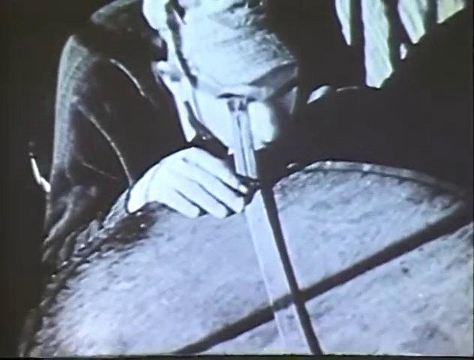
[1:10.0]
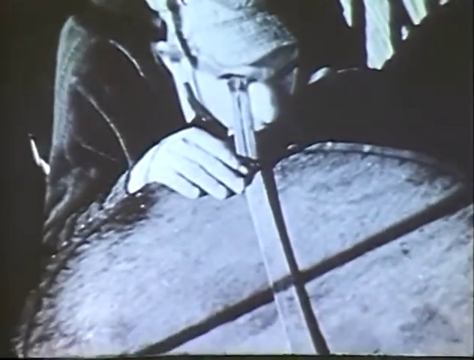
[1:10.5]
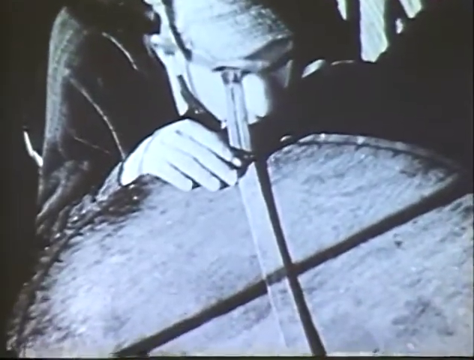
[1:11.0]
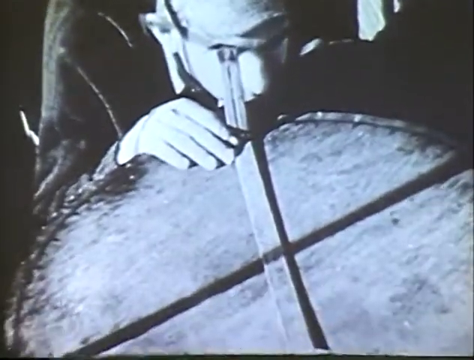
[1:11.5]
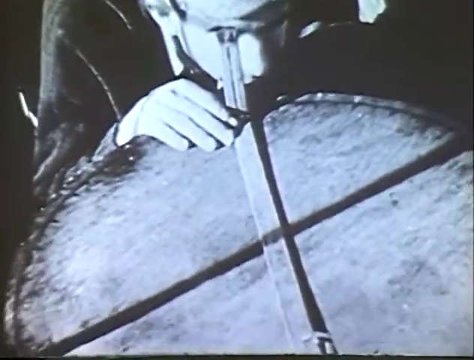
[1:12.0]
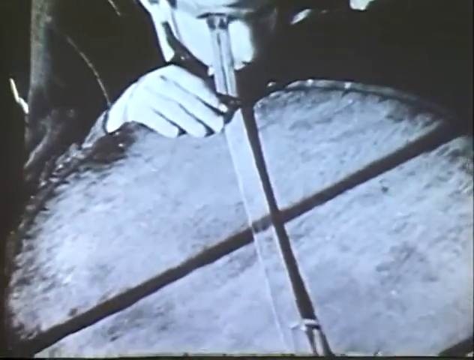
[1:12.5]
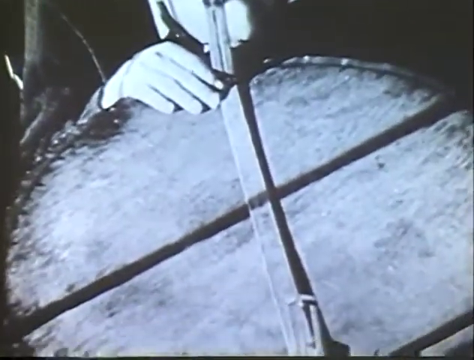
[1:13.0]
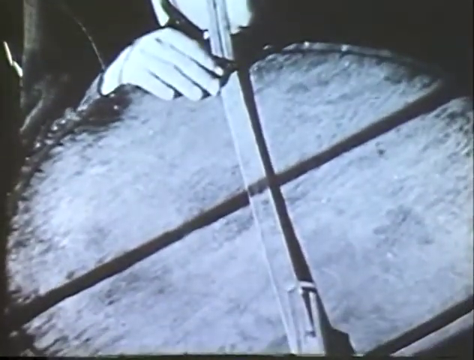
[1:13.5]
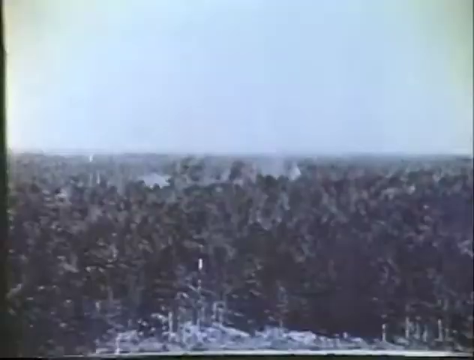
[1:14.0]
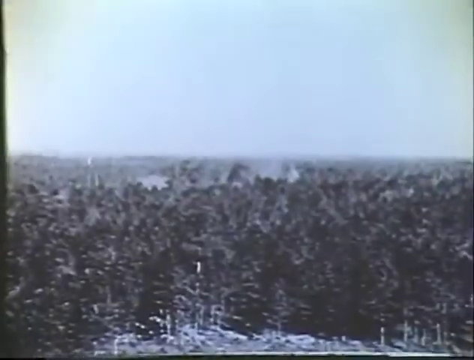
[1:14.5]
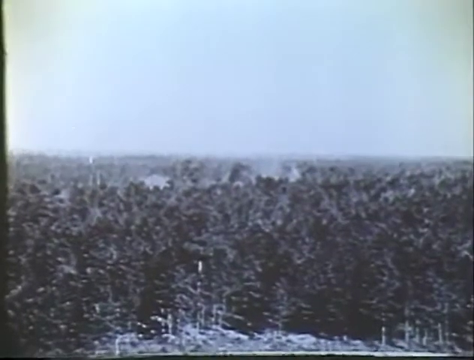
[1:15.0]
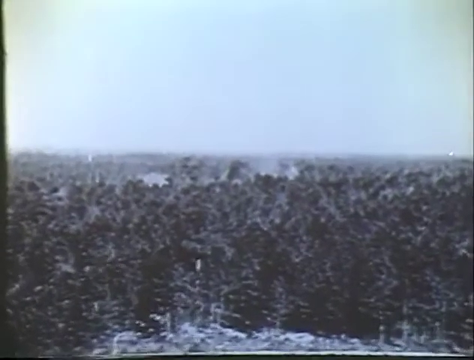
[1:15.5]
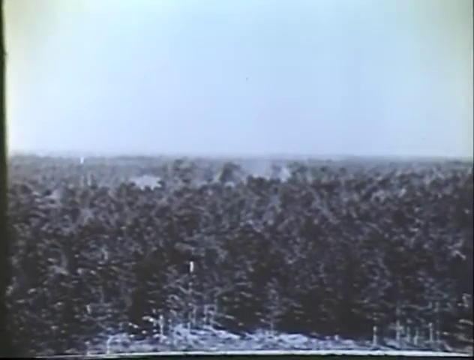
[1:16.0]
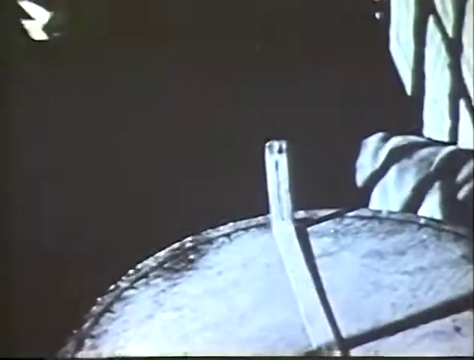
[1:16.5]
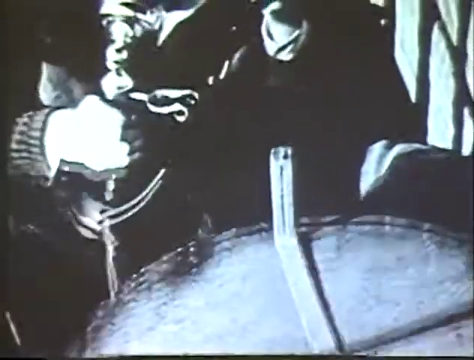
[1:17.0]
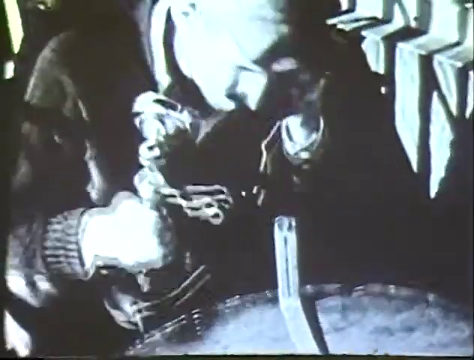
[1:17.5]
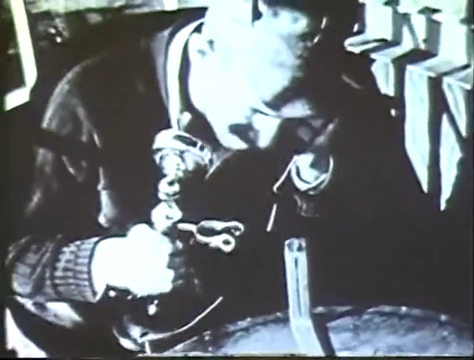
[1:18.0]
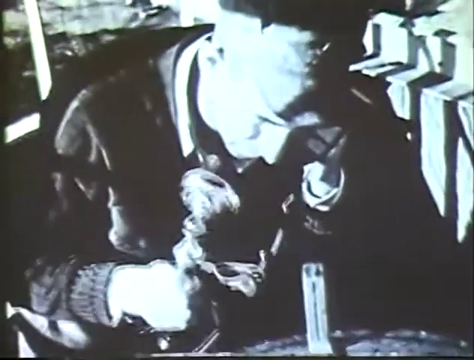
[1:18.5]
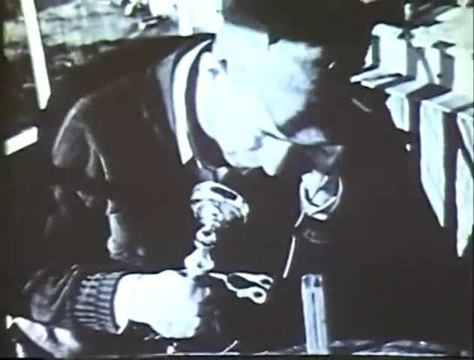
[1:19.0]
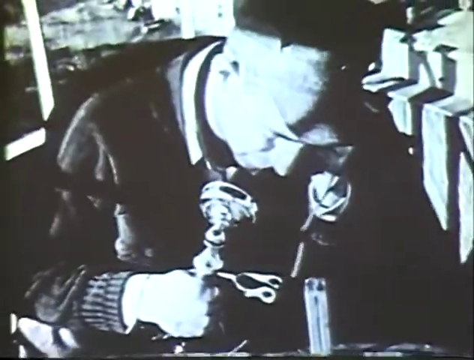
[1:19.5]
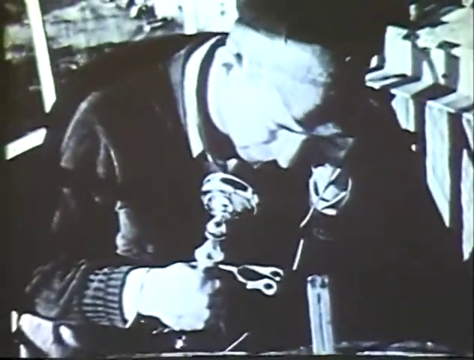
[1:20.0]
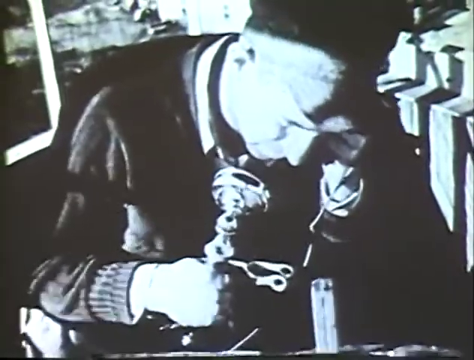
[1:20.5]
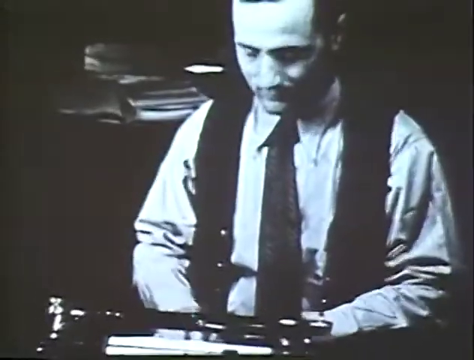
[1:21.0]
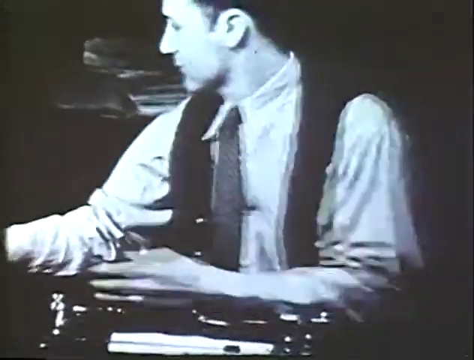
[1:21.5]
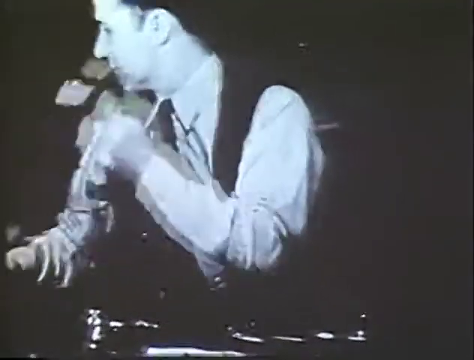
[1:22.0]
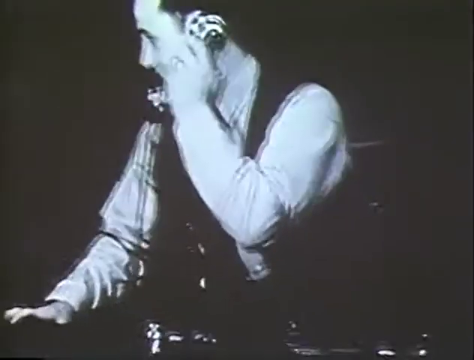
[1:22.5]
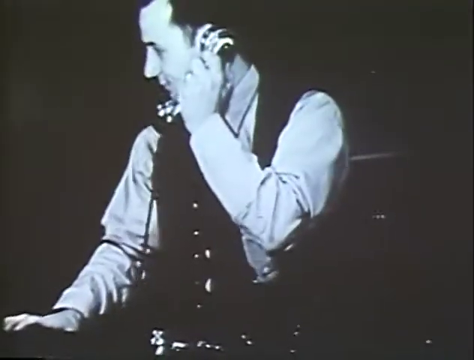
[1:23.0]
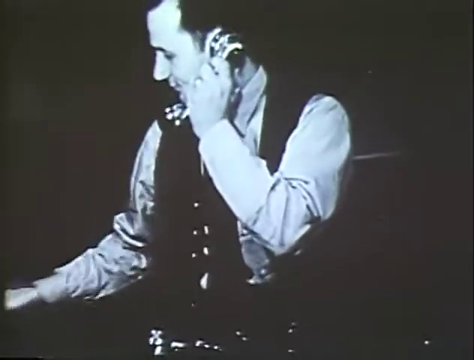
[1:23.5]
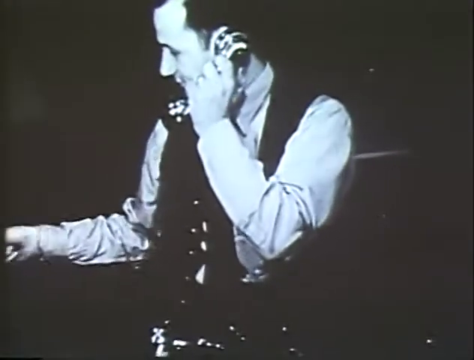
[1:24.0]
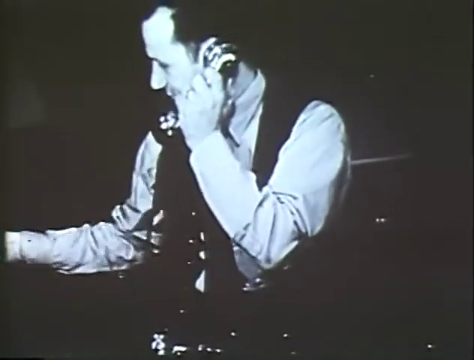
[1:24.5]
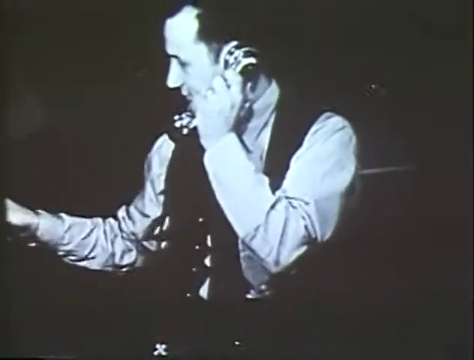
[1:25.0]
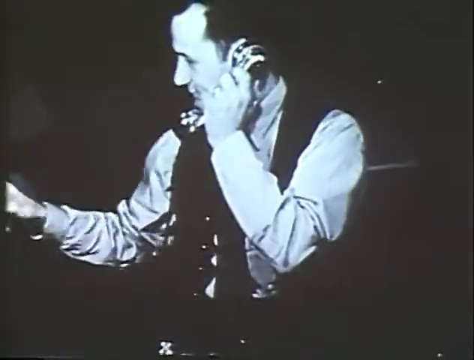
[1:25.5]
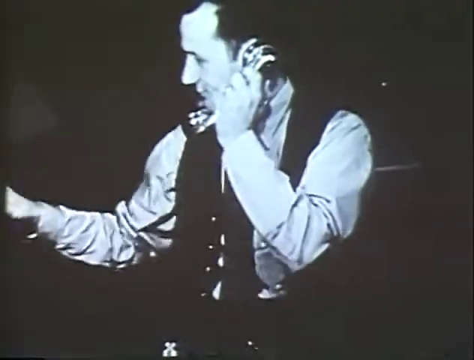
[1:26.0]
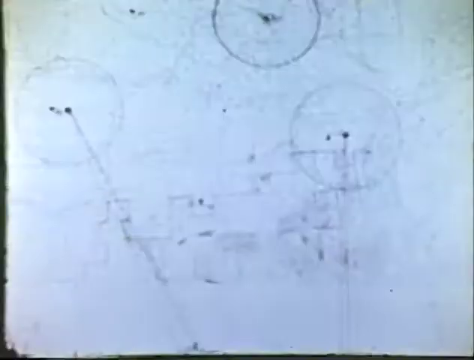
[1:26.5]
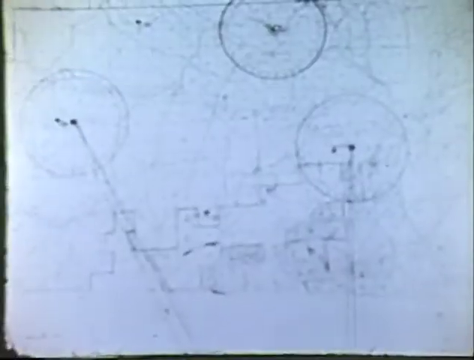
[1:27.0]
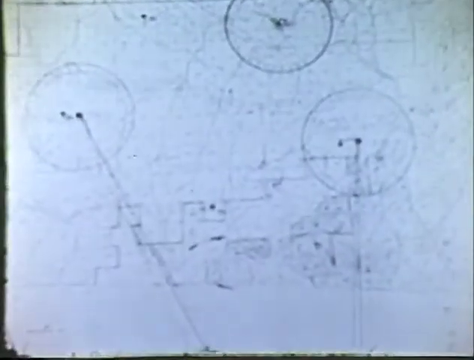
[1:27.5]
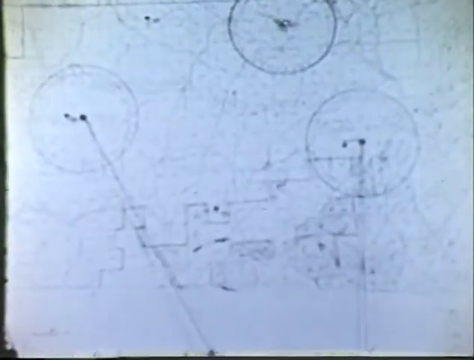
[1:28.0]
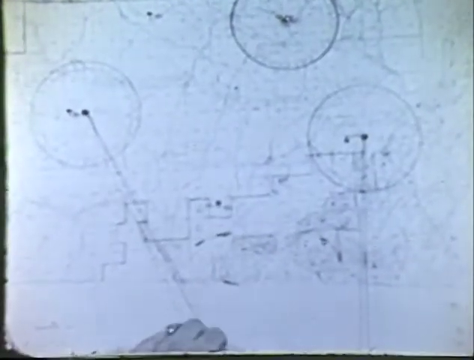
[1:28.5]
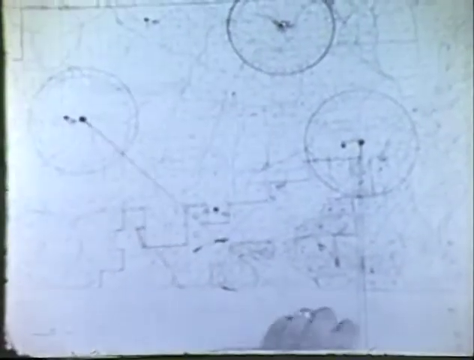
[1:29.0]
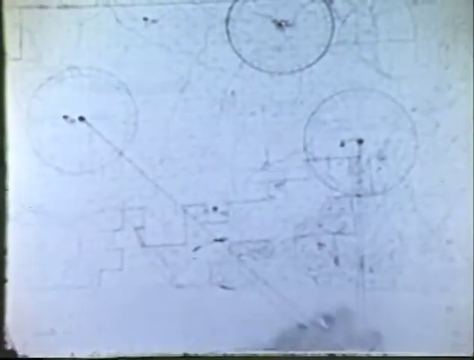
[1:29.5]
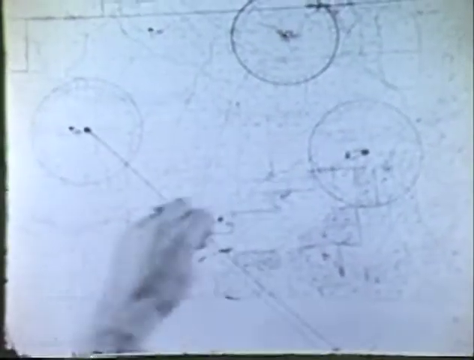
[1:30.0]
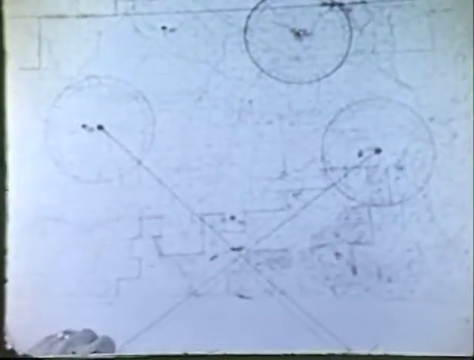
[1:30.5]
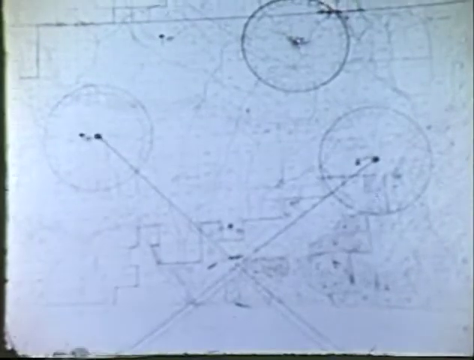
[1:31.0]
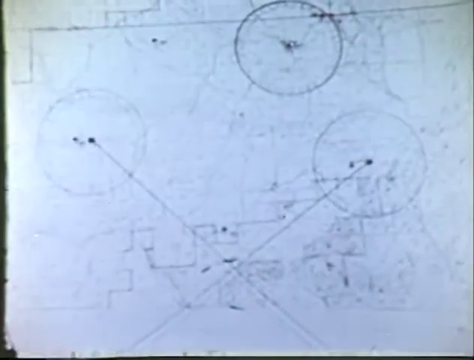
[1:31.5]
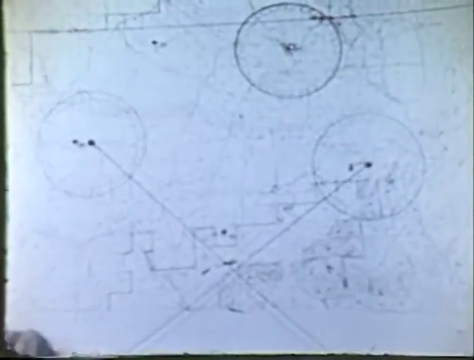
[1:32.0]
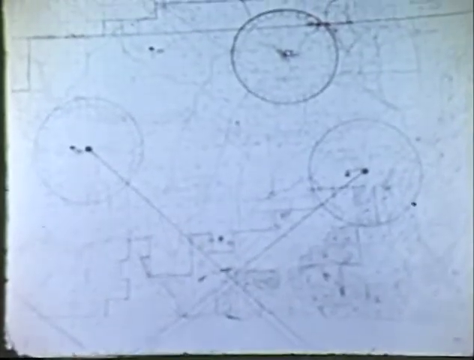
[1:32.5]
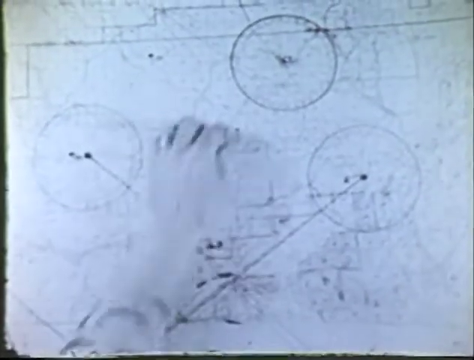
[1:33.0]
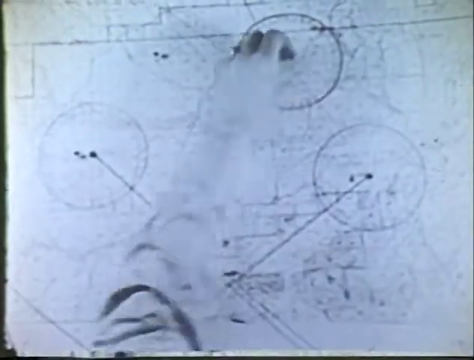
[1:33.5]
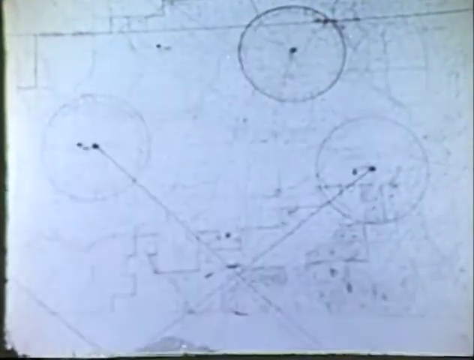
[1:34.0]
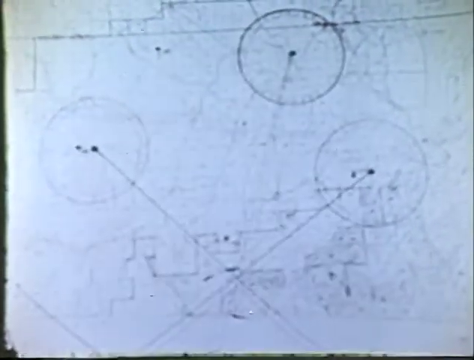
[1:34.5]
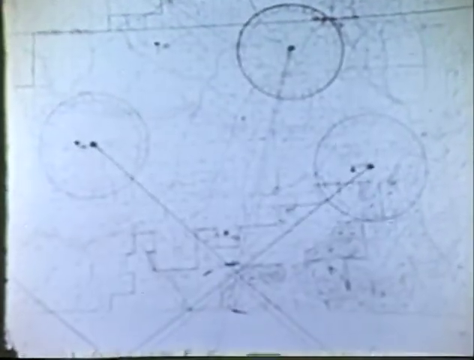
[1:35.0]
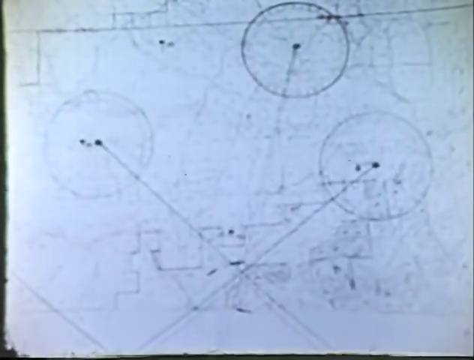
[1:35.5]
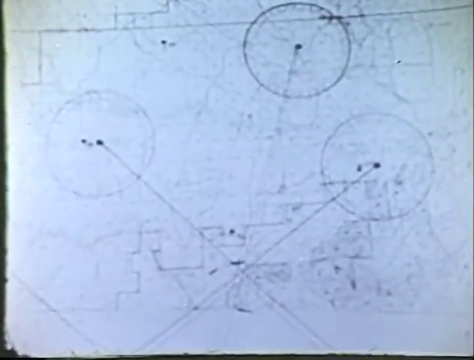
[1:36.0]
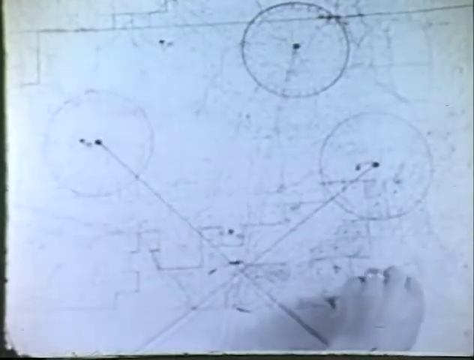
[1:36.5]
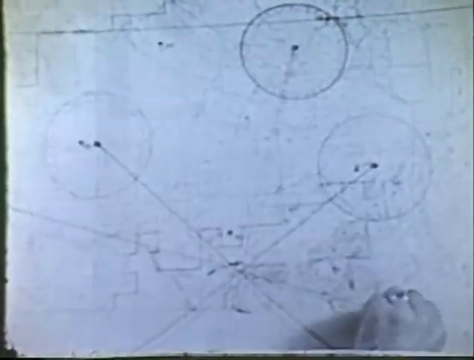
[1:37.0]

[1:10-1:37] In black and white, a man wearing an engineer's cap and a dark shirt is hunched over a round wooden tray in front of him, across which there seems to be the thin metal tube of a telescope. His right hand is on the tray and his right eye is pressed to the telescope as he peers through it, his head bobbing up and down slightly. The camera pans across the length of the telescope and changes to a view of the valley, with the horizon in the distance and wooded mountains in the foreground. In the center foreground, smoke is rising from the forest. The man then takes an old-fashioned telephone with a handset, comes over to the telescope and talks into the phone, holding it in his right hand with the receiver at his left ear. He speaks to someone who is then shown sitting at a typewriter, typing, wearing a dark vest, a white shirt and a tie. The man turns suddenly to his right, picks up the telephone, holds it to his left ear with his left hand, and operates a switchboard with his right hand. A hand-drawn map of the area follows; it looks like an aerial map with various areas highlighted in circles, and a man's hand draws strings between the centers of several of the circles.